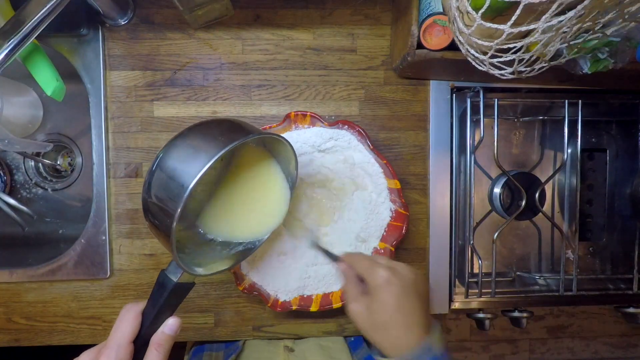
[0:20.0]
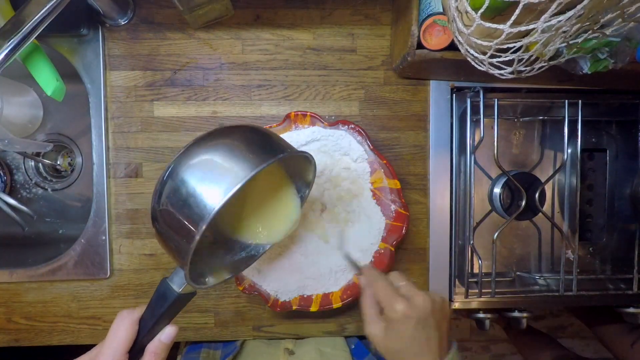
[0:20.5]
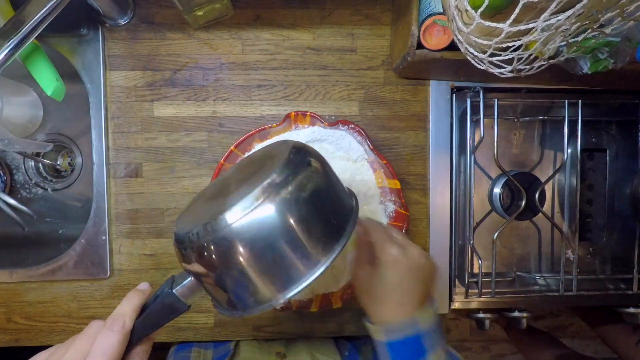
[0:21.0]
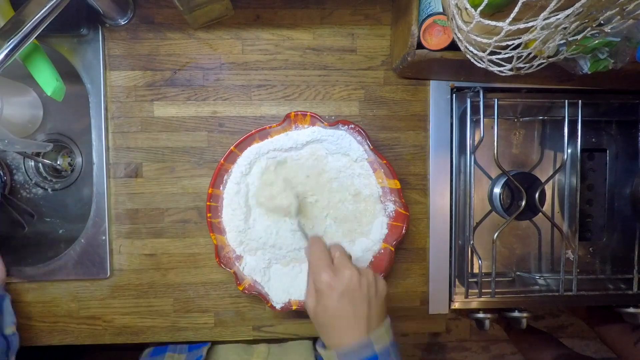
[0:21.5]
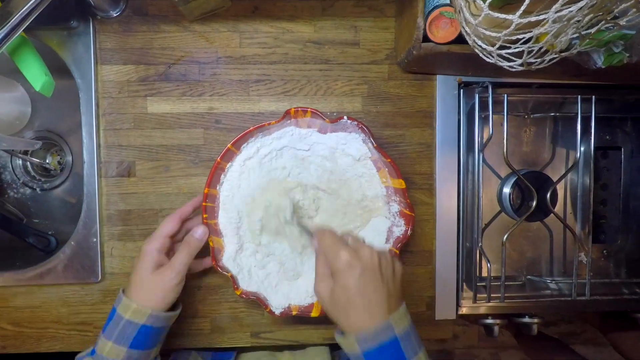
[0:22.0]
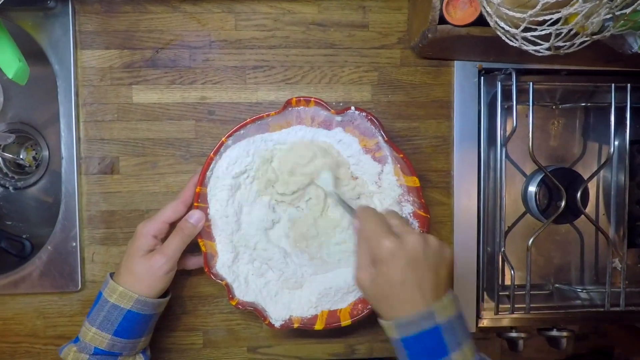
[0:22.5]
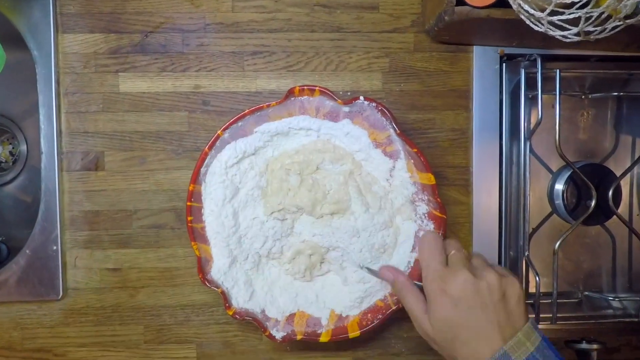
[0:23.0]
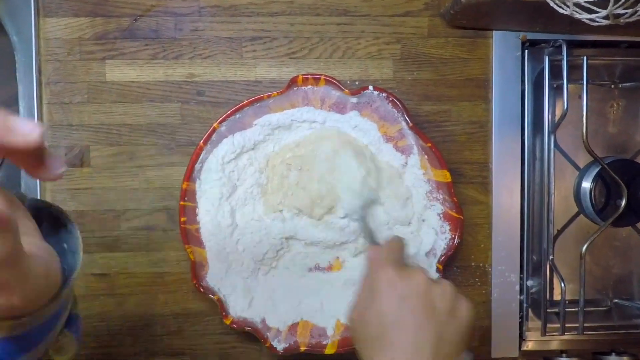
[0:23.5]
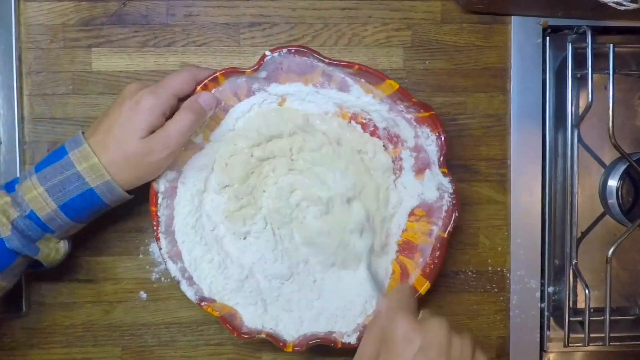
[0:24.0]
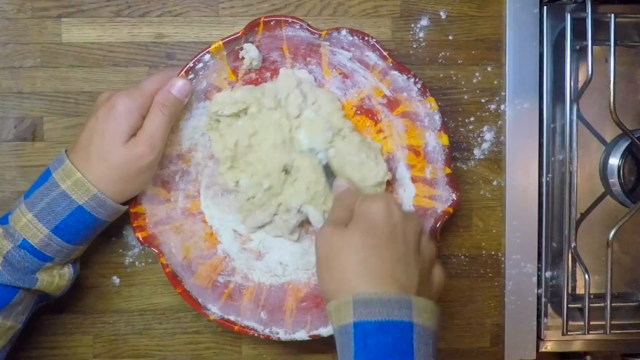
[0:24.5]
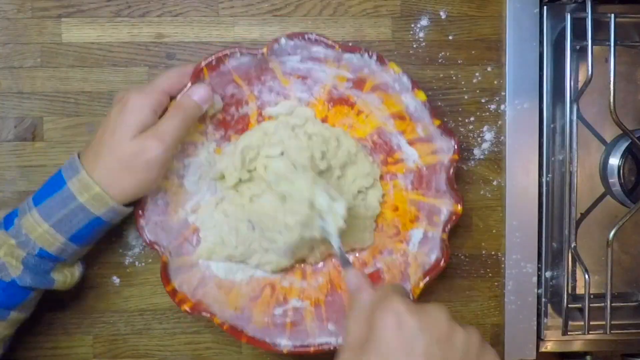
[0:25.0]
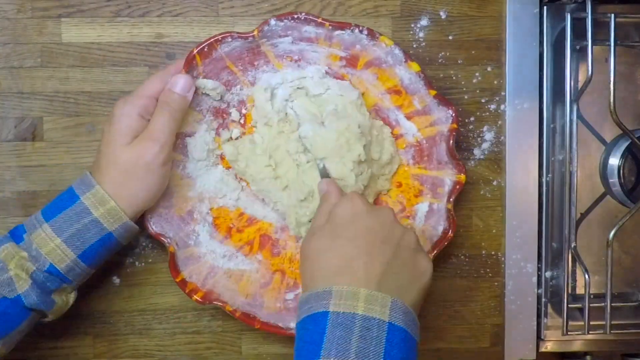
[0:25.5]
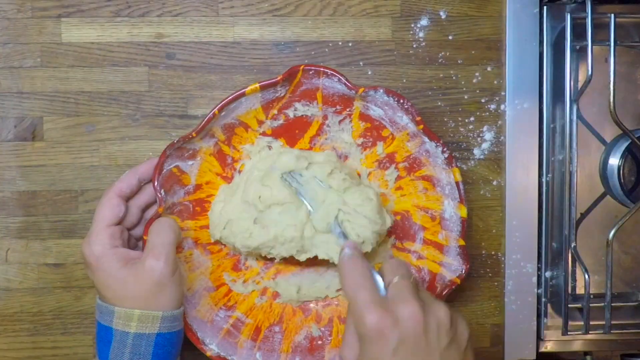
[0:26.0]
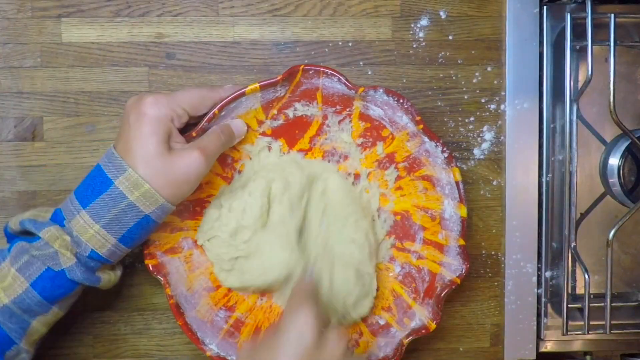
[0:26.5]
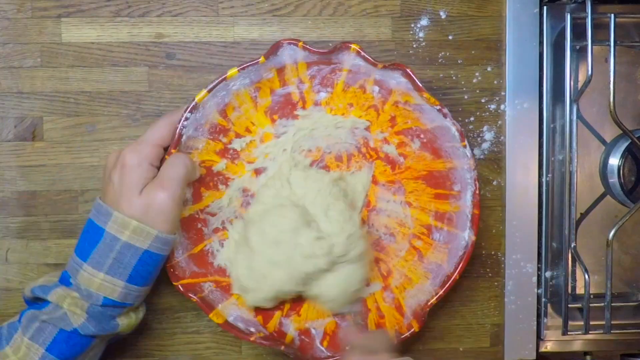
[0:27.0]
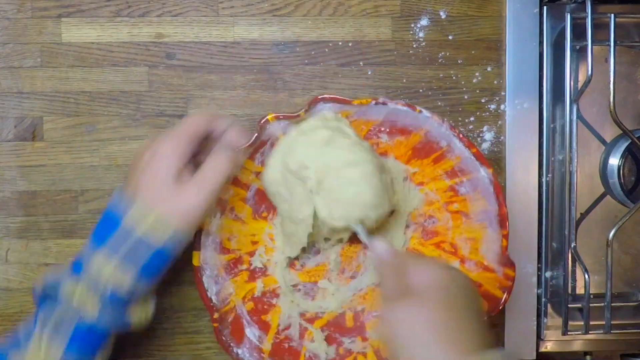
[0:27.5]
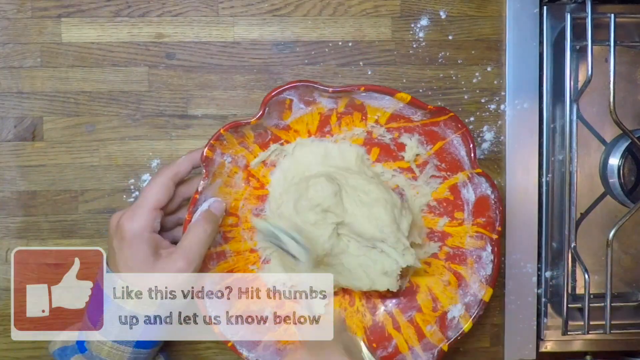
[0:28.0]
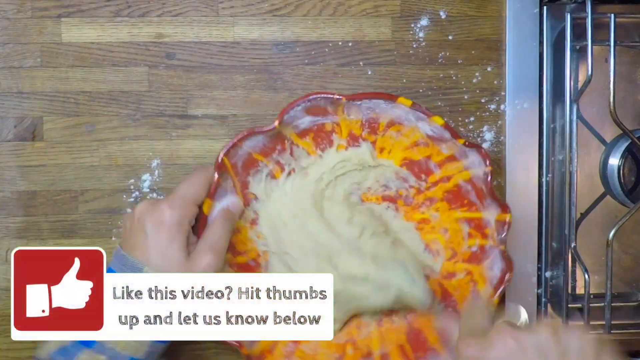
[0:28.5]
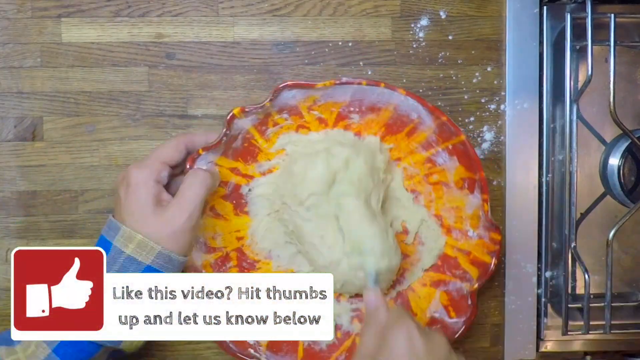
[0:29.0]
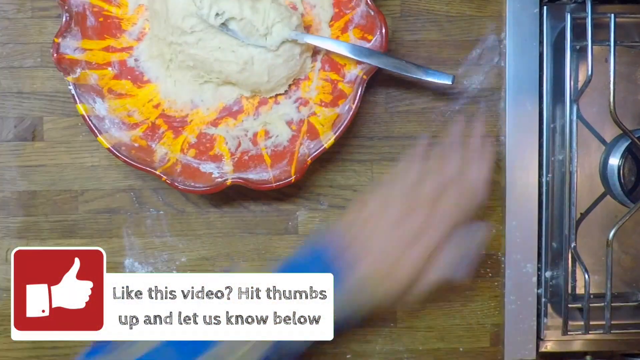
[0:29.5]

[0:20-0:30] The pot has been taken off the stove, and the woman adds its contents to the bowl where she mixed everything. She mixes it all together very thoroughly; it seems to form a paste and then turns into a dough. A message pops up reading "if you like this video hit thumbs up". The bowl is not huge, but it is a decent size.